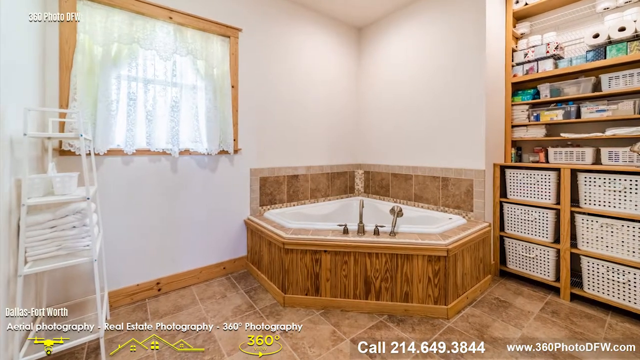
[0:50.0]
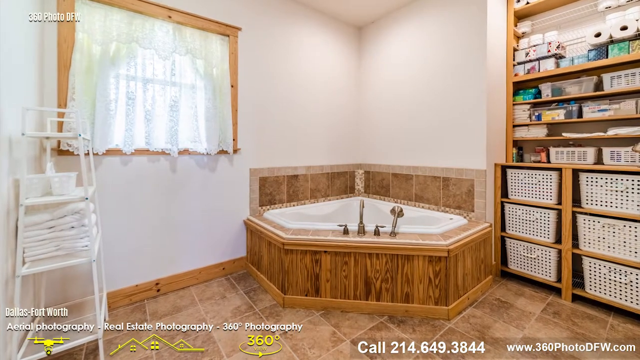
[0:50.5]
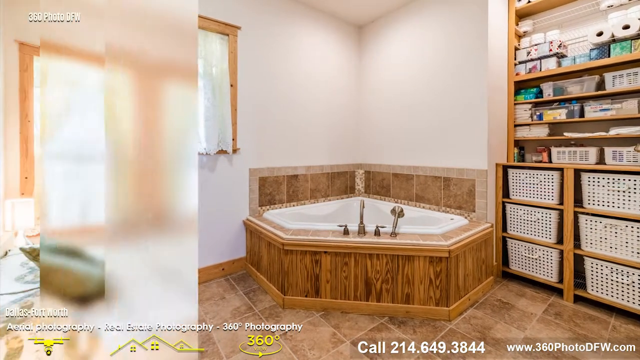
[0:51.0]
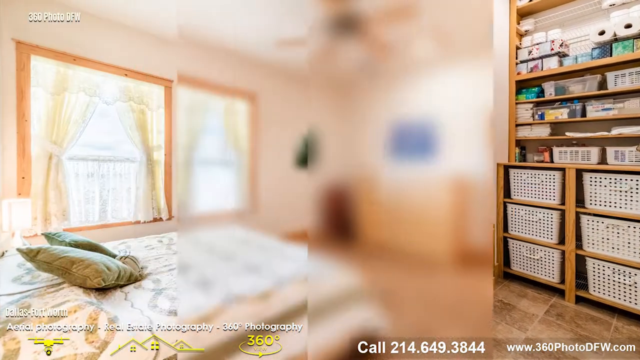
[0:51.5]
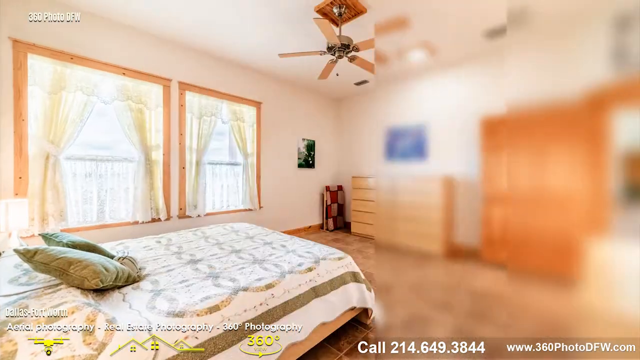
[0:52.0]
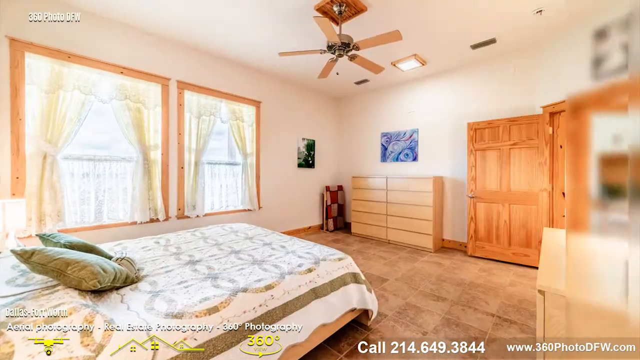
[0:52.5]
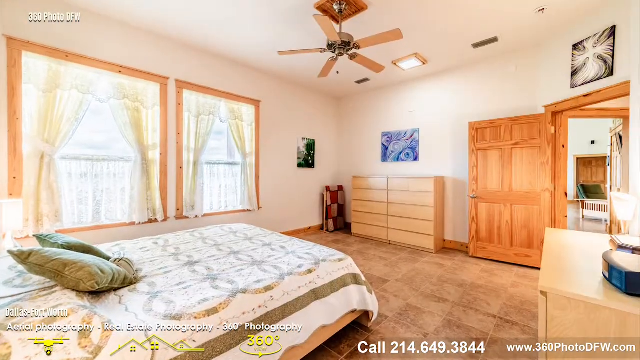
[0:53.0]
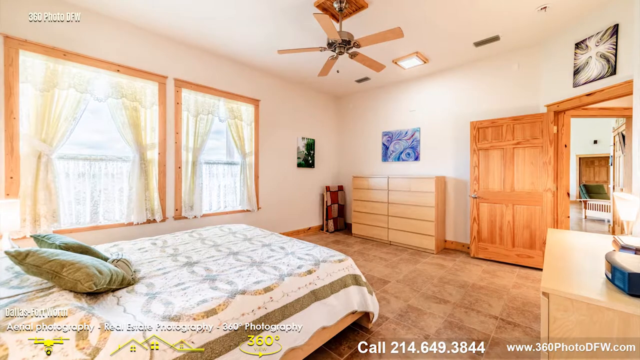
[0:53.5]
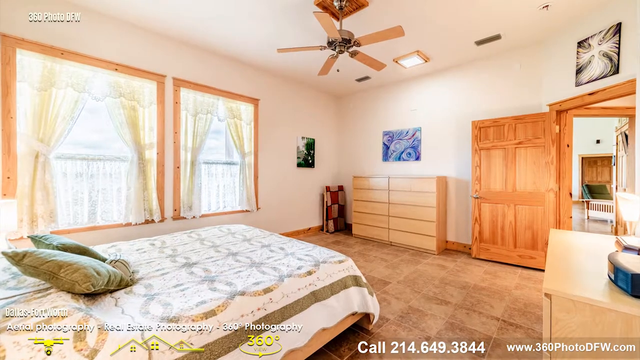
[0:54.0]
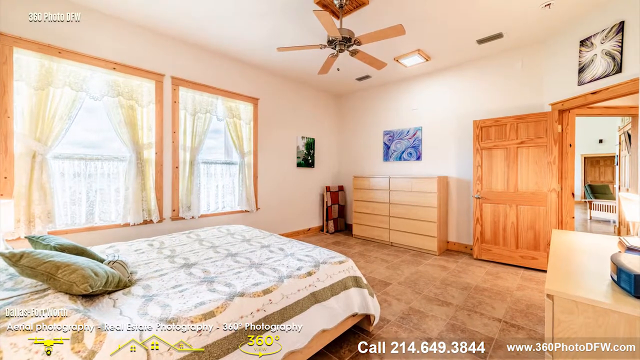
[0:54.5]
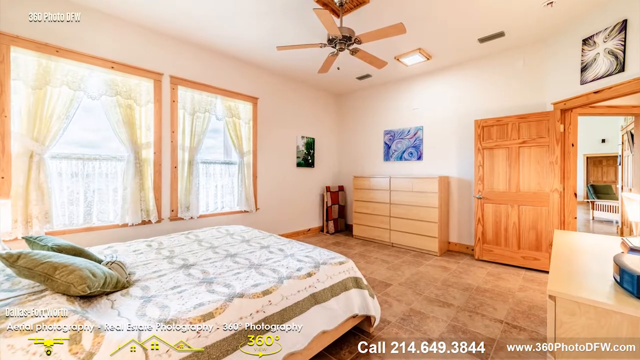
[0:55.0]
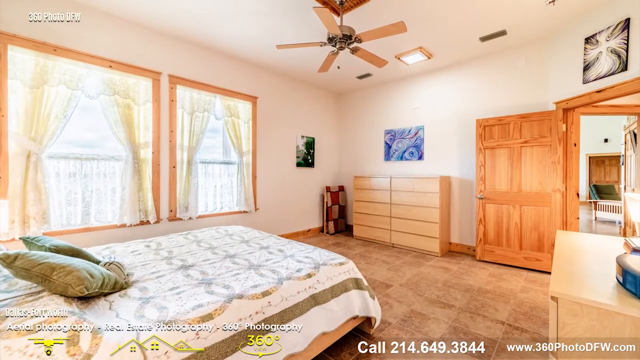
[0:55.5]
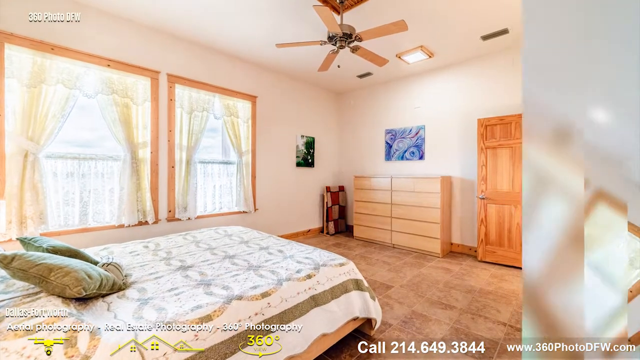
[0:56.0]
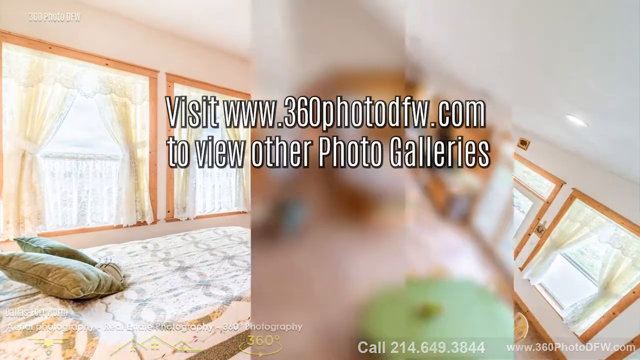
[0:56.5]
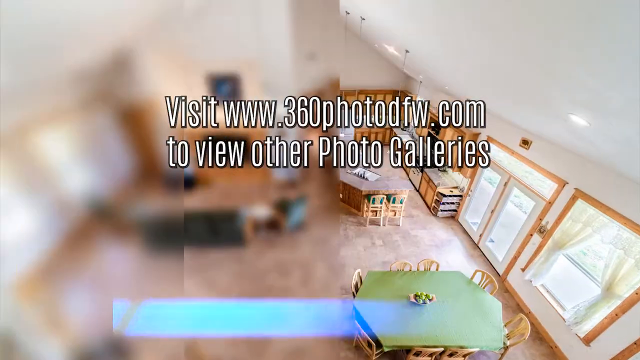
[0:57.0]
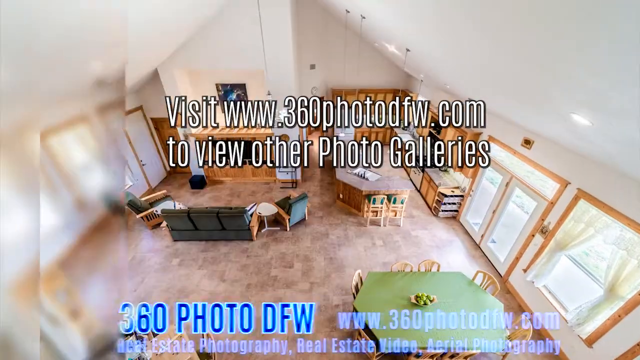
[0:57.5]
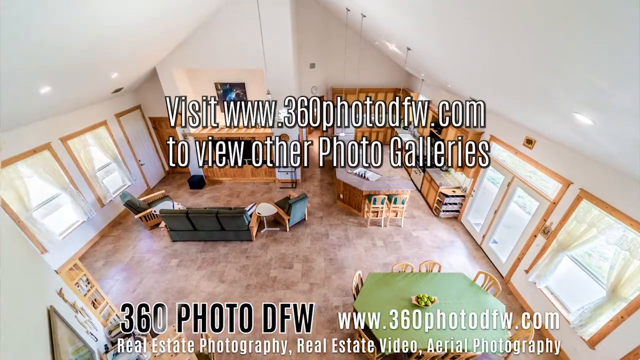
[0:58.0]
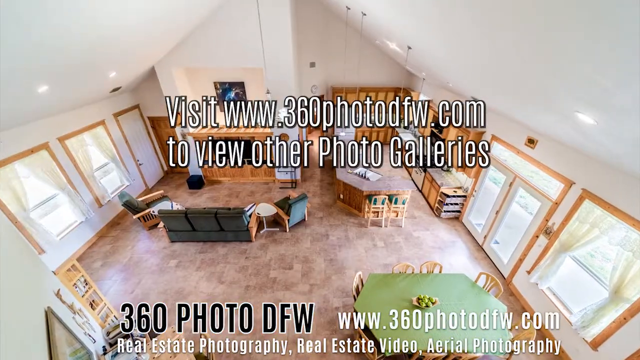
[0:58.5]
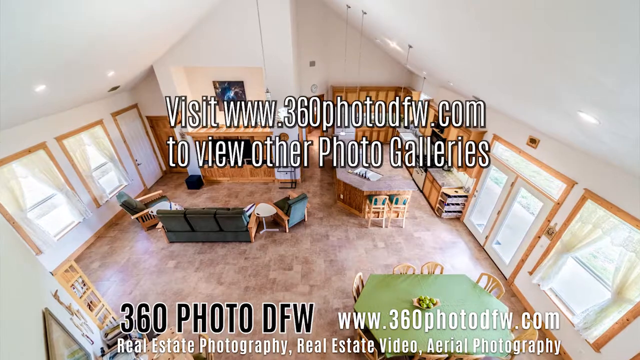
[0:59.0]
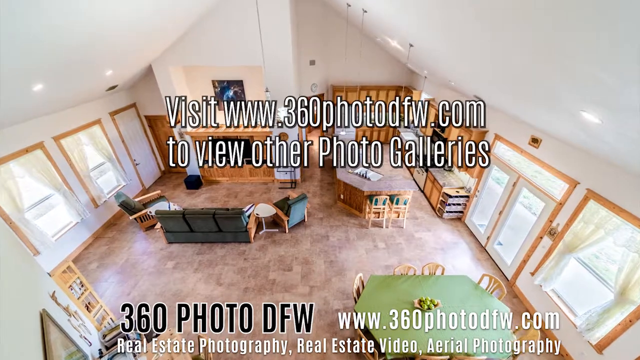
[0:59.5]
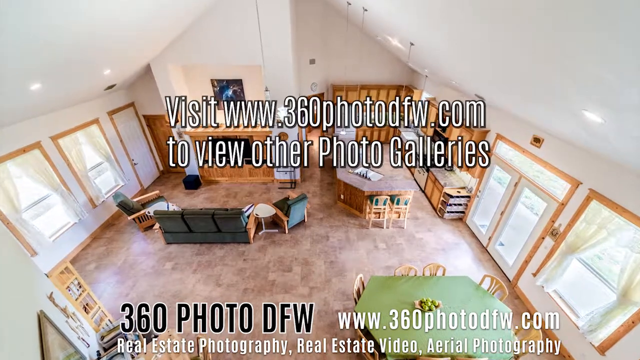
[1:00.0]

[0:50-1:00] The bathroom shot shows a hexagonal bathtub or hot tub in the center of the frame. To the left is a window with white curtains and a lot of daylight coming in, and to the left of that, a towel holder. To the right of the tub are large storage shelves; the bottom three shelves have large storage baskets, and the top ones hold various bathroom supplies. A wipe leads to another angle of the bedroom, showing the bed and two large windows to the left with some white curtains and a lot of daylight coming in. The walls in the house are all white or cream, the wood on the furniture, fixtures, and doors is all light wood colored, and all the doors are larger than average. A door is open, with the living room visible in the distance. There is a ceiling fan. Then an overhead view of the open kitchen and living room appears with a graphic in the middle of the screen saying "visit www.360photodfw.com to view other photo galleries," along with a phone number.